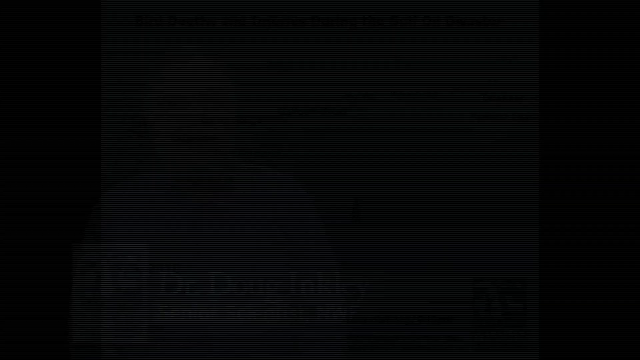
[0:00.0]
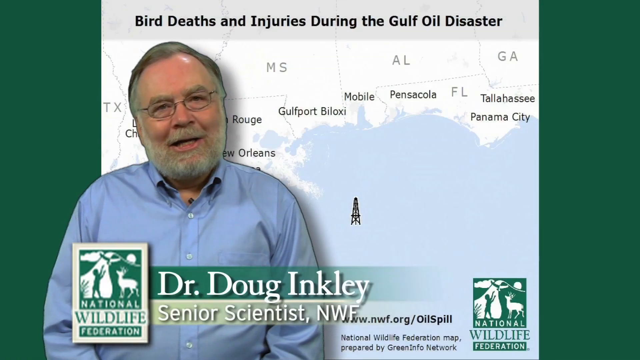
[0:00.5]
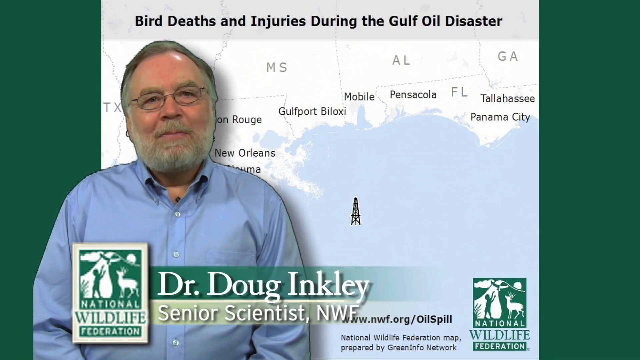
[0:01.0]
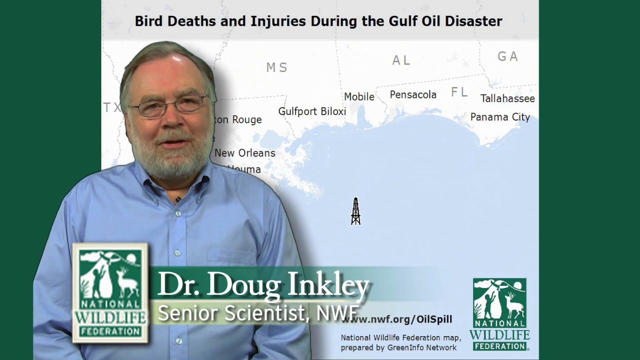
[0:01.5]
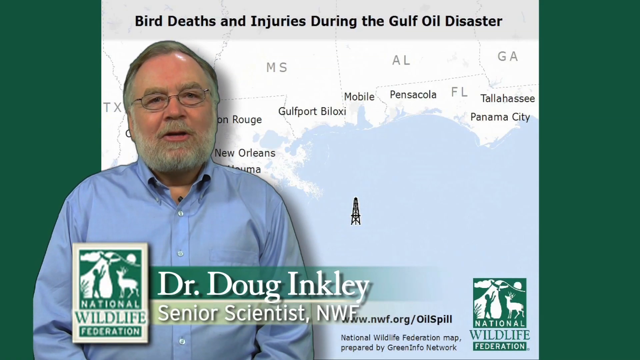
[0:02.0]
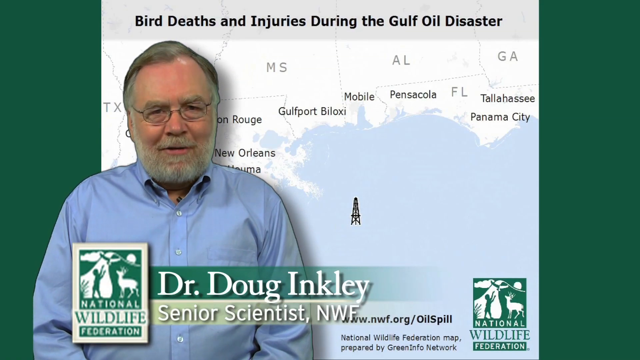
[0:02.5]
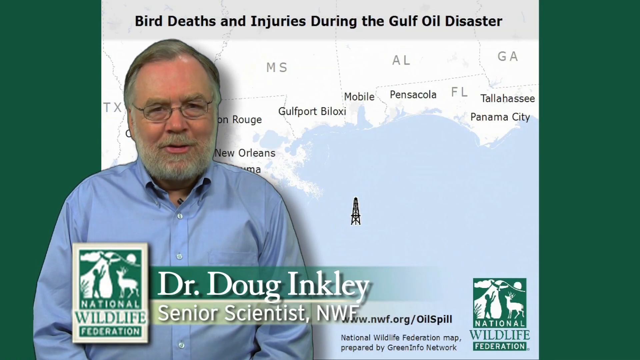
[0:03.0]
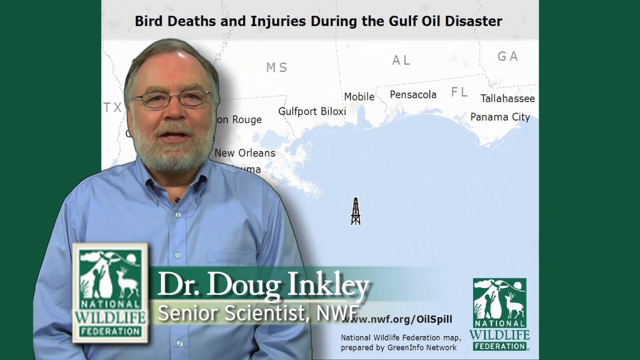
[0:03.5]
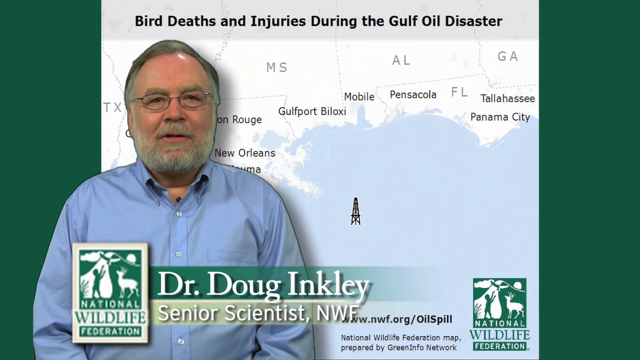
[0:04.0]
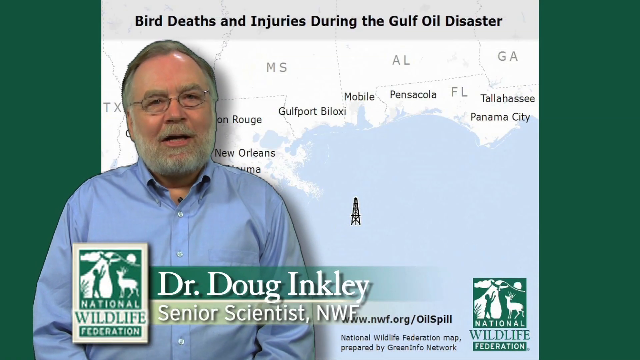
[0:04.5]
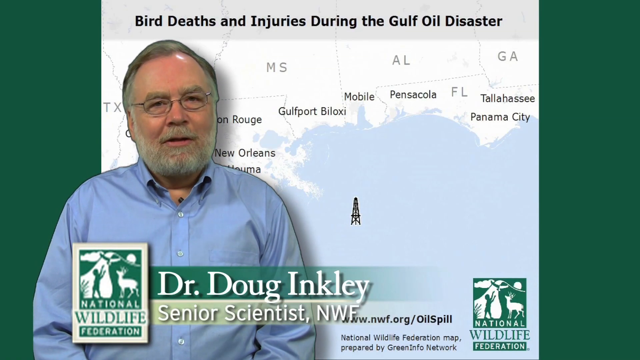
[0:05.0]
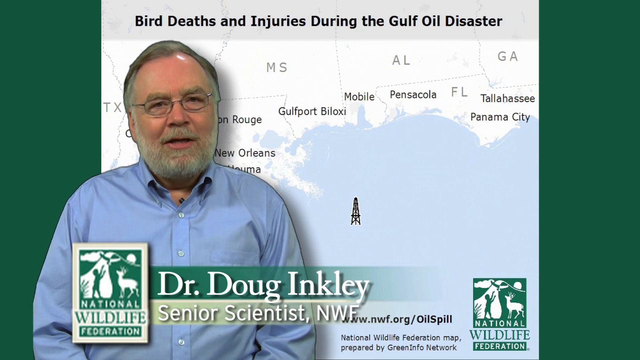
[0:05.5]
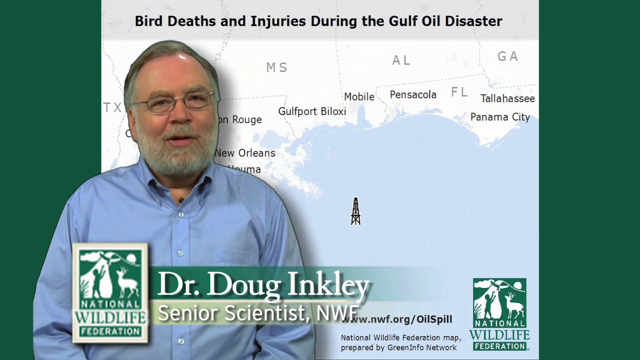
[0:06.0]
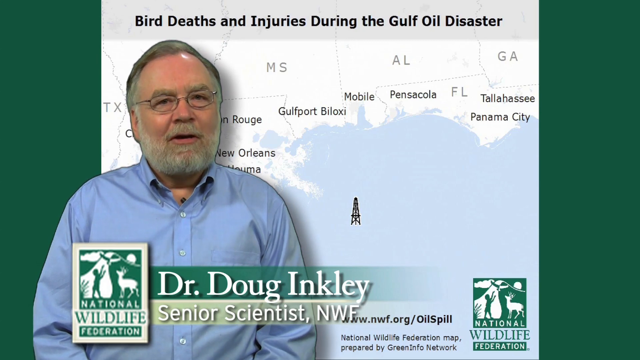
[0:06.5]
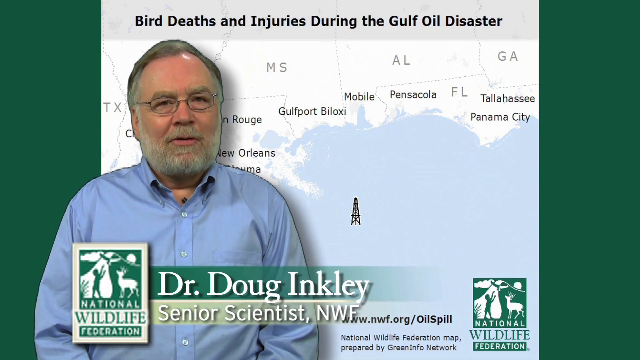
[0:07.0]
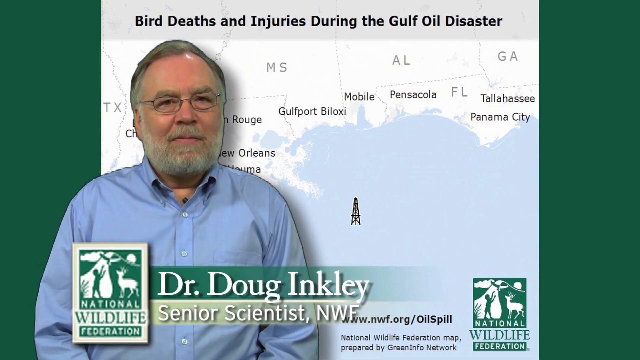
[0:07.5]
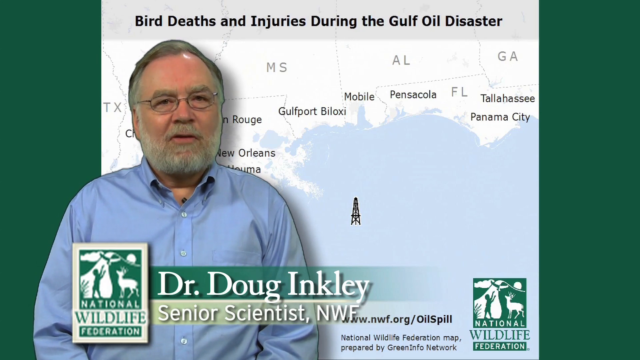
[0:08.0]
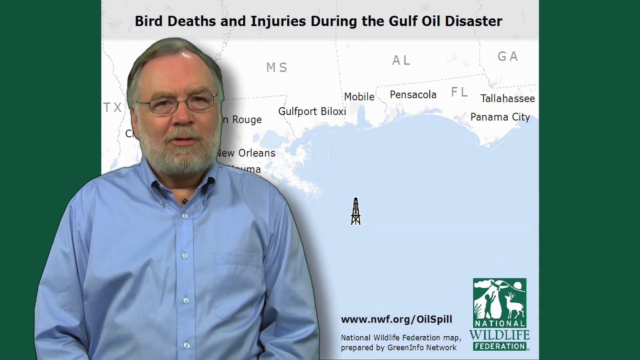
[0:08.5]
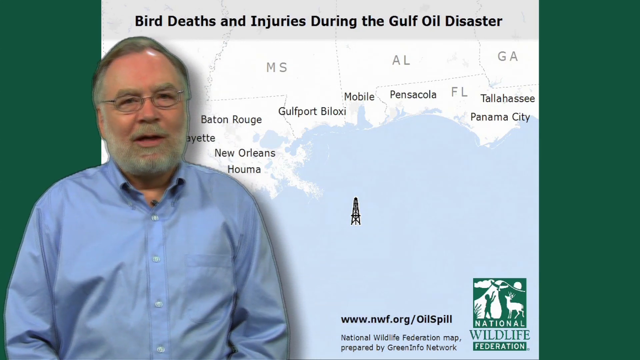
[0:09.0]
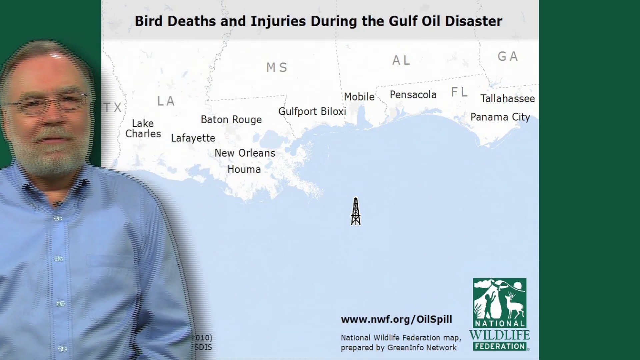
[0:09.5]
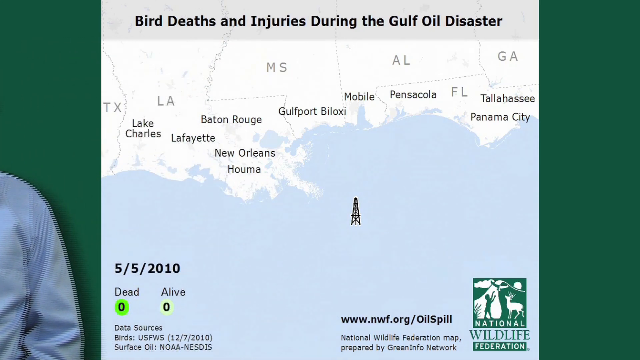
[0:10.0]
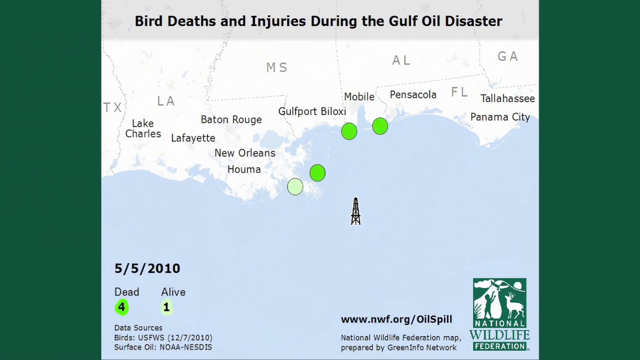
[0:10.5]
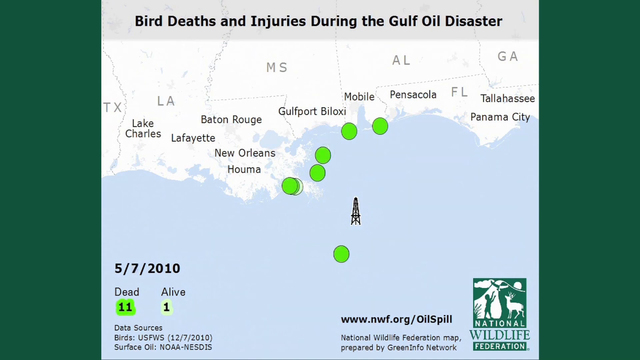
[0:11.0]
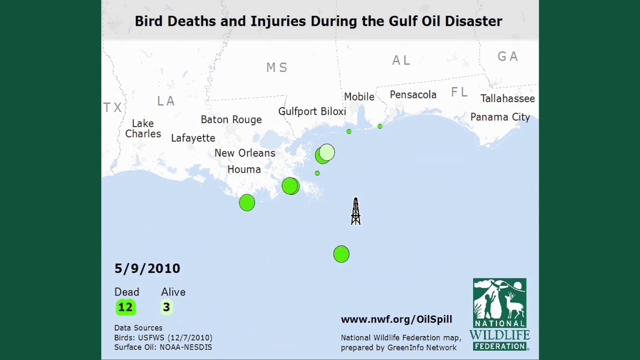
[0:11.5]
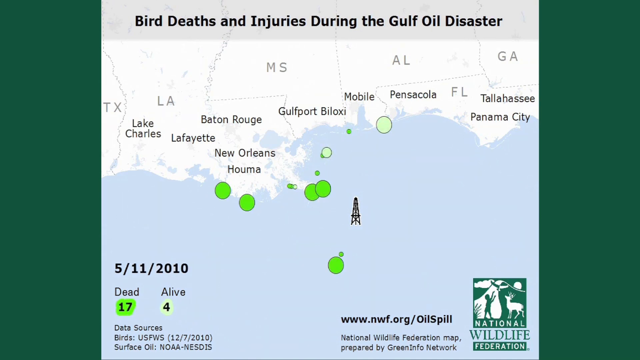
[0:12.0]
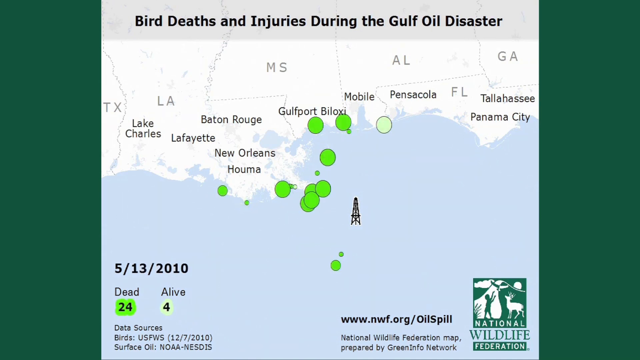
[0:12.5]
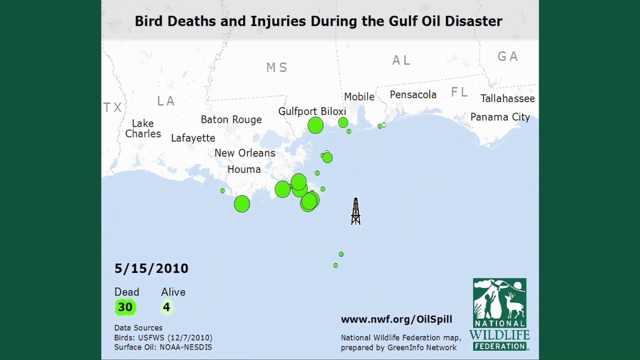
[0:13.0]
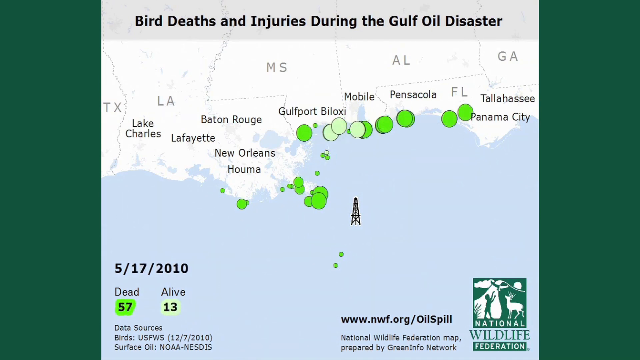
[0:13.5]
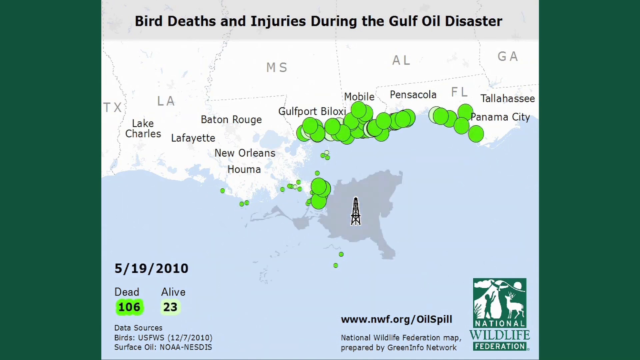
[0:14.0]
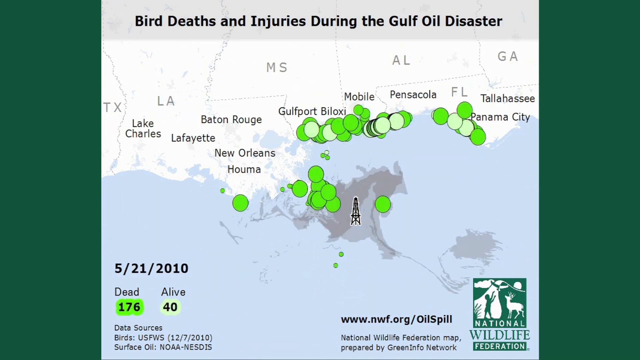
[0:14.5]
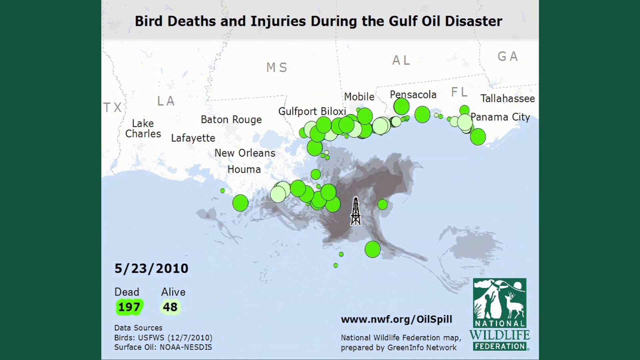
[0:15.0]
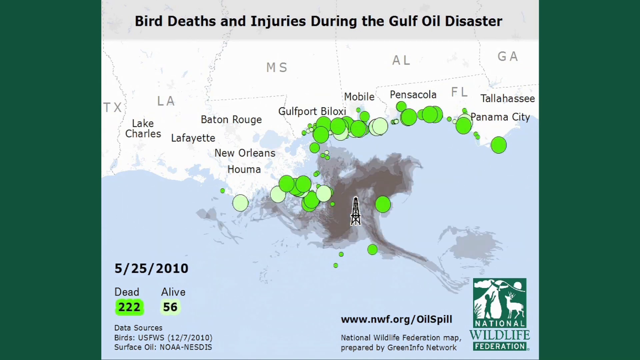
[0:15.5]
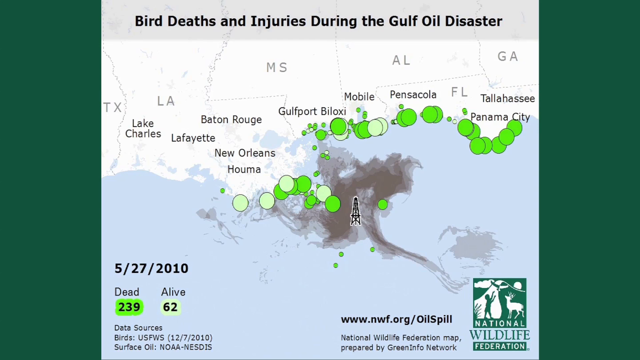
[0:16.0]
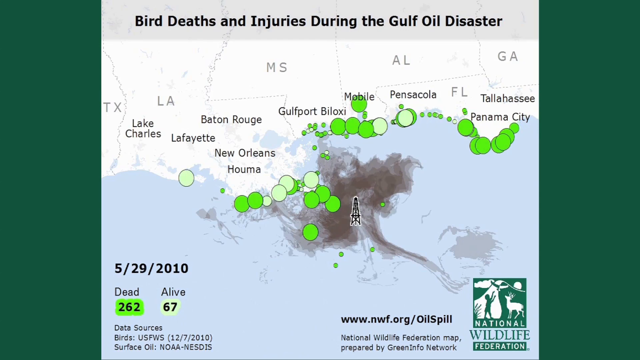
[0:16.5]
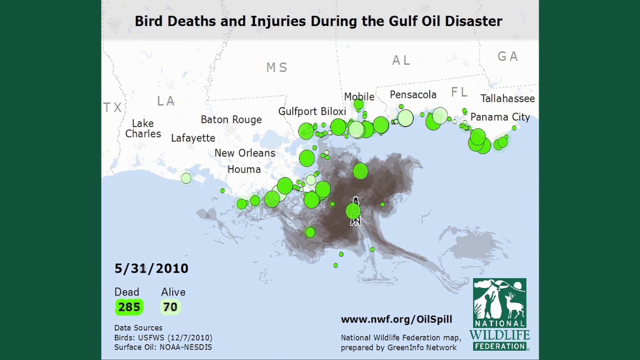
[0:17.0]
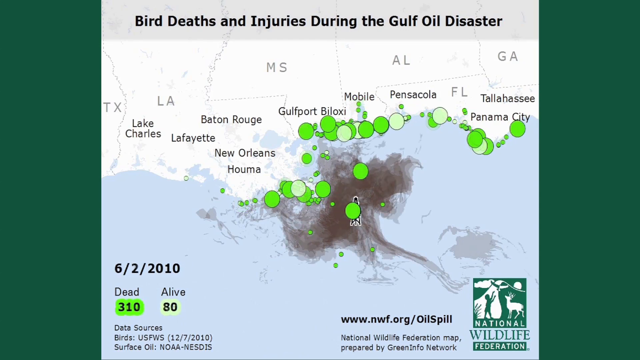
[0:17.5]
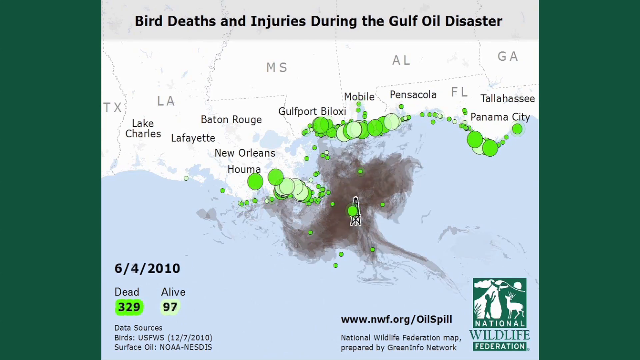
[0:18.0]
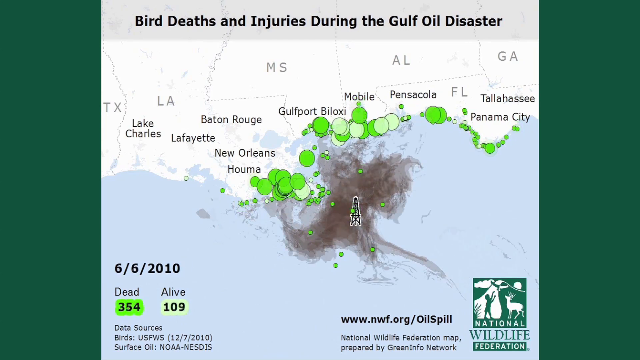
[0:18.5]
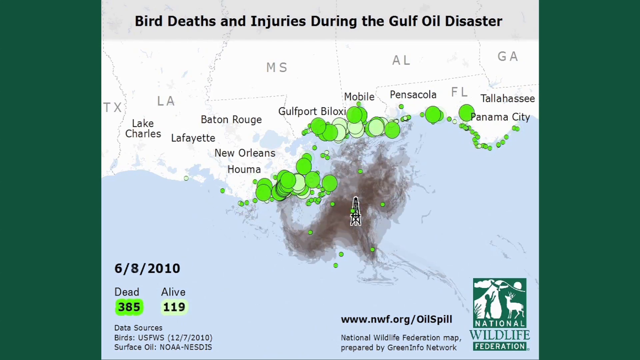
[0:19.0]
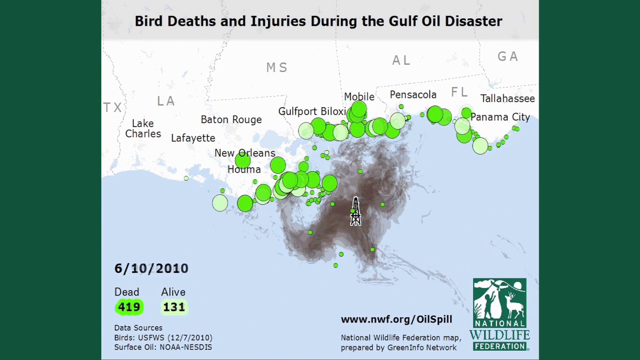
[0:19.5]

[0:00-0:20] A man is on the left side of the frame, facing the viewer and talking. He appears fairly old, around 60 or 70, is Caucasian, wears glasses and a light blue shirt, and has a white beard and mustache. In the bottom left is a green and white square that reads "National Wildlife Federation," and a green and white banner reads "Dr. Doug Inkley, Senior Scientist, NWF." Behind him appears to be a white and blue map, with the land in white, and at the top black text reads "bird deaths and injuries during the Gulf Oil Disaster." In the center of the ocean on the map there seems to be a black tower, possibly the site of the Gulf oil disaster. The man talks, opening his mouth and nodding his head a little, and then his image is pushed over to the left and out of the frame. A date in the bottom left reads "May 6th, 2010," with "dead" marked by a green circle and "alive" marked by a white-yellow circle, each with black numbers inside. The dead count starts at zero and climbs as the date advances day by day through May 18th, May 20th, May 21st and onward. Green and yellow circles begin appearing around the coast near Panama City, Houma and New Orleans, and what looks like brown smudges spread out around the tower as the oil spill grows. The counters keep rising, and the dates reach June 10th or 11th, with the dead count at around 443 and alive at around 137. The green and yellow dots flicker and appear along the coast and around the tower.